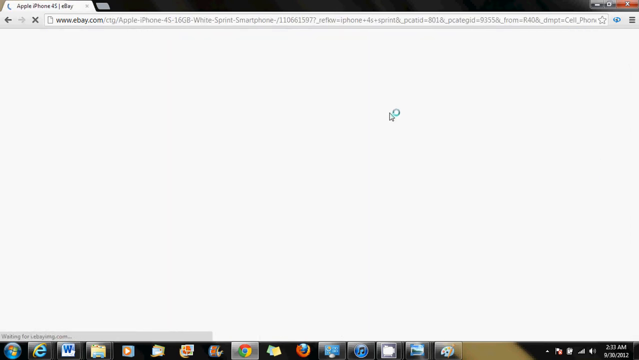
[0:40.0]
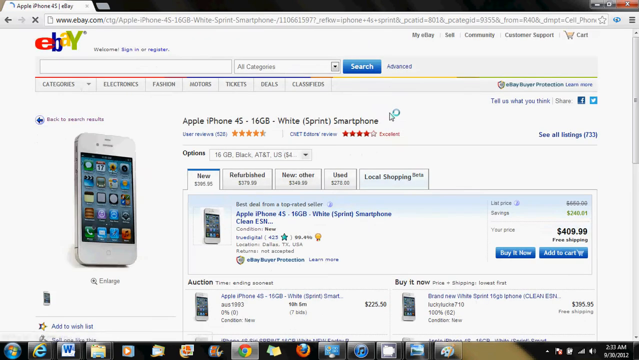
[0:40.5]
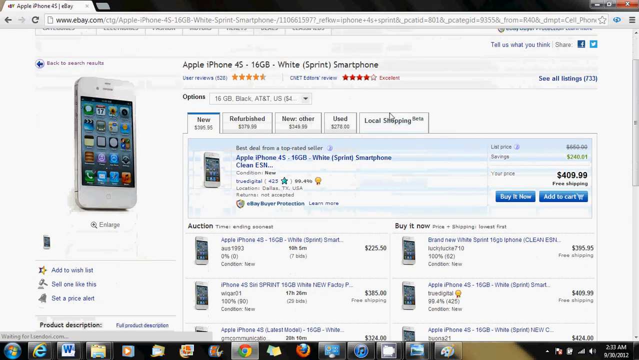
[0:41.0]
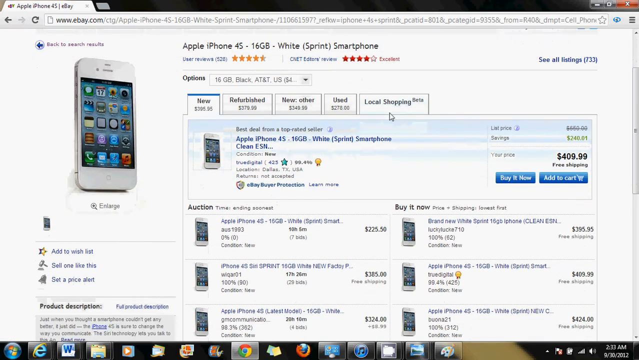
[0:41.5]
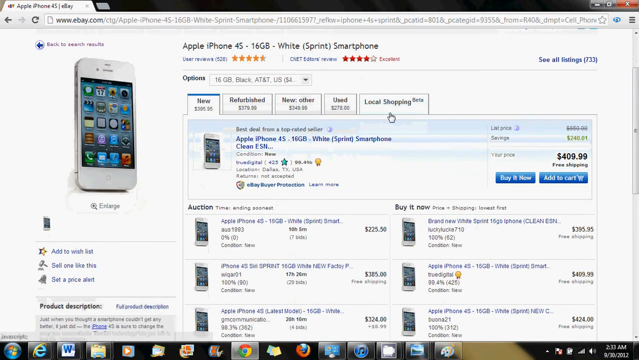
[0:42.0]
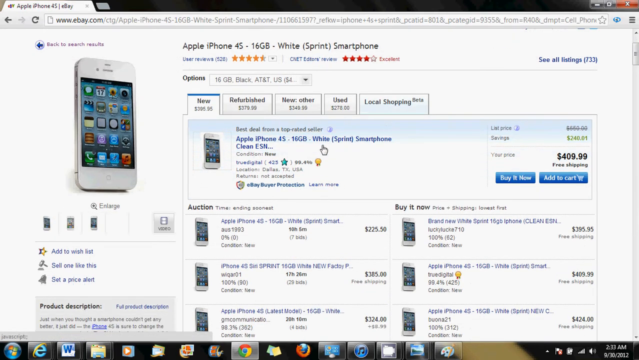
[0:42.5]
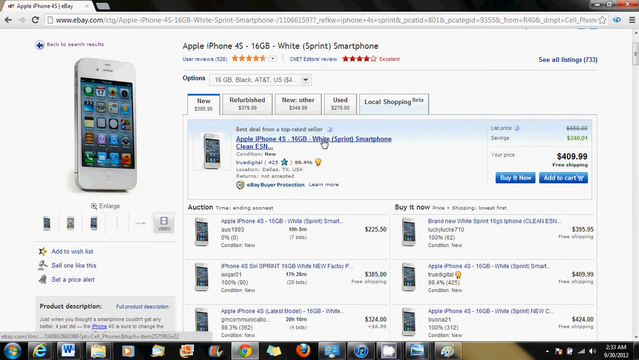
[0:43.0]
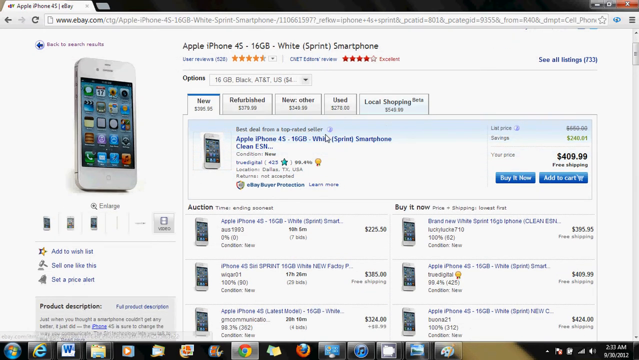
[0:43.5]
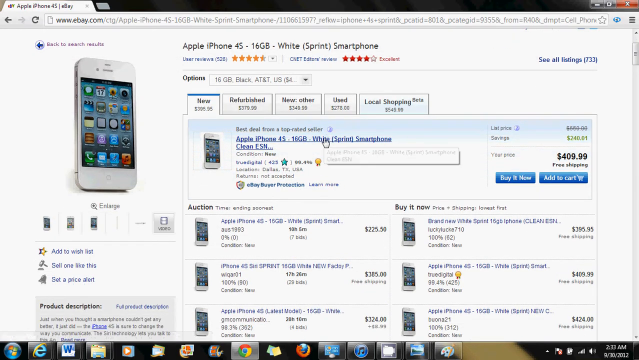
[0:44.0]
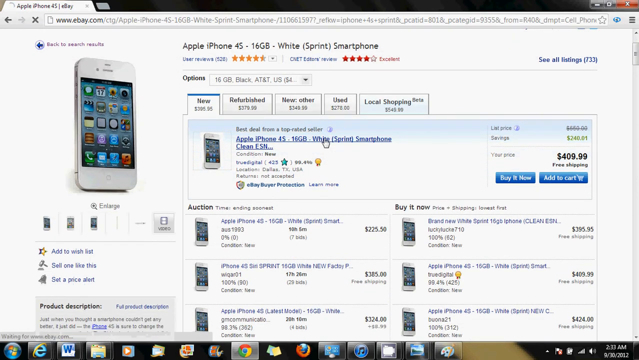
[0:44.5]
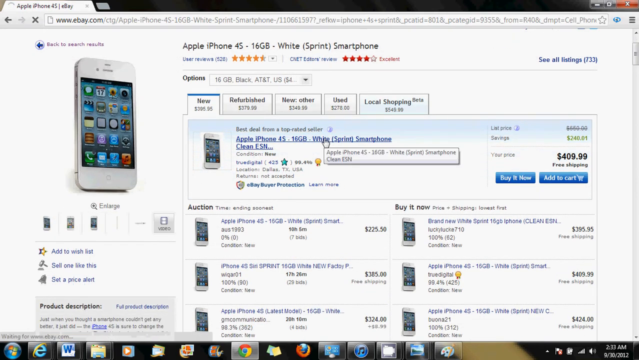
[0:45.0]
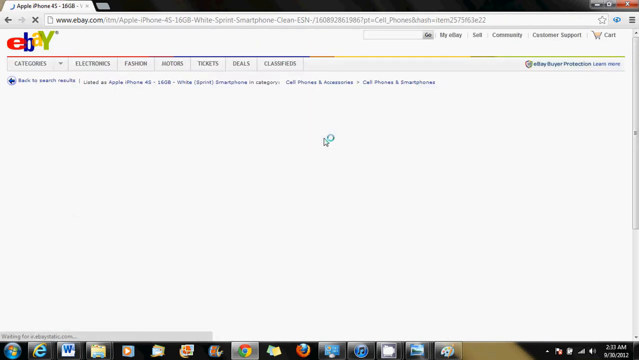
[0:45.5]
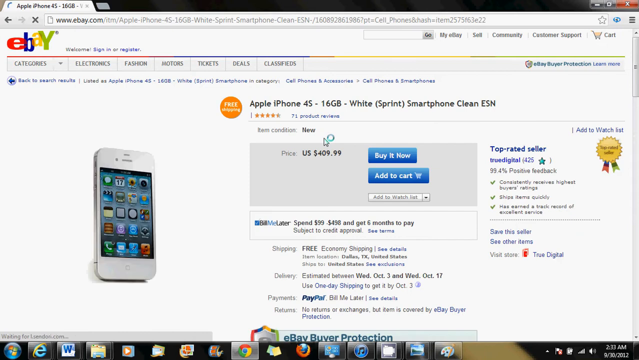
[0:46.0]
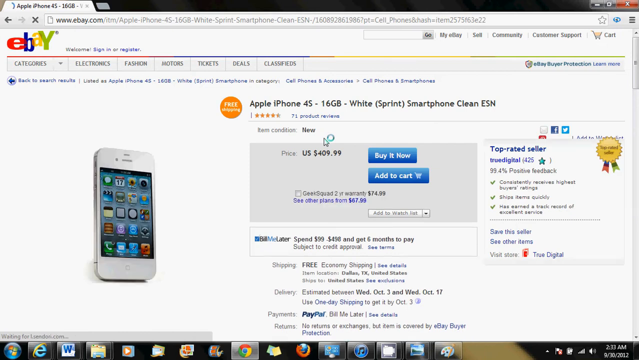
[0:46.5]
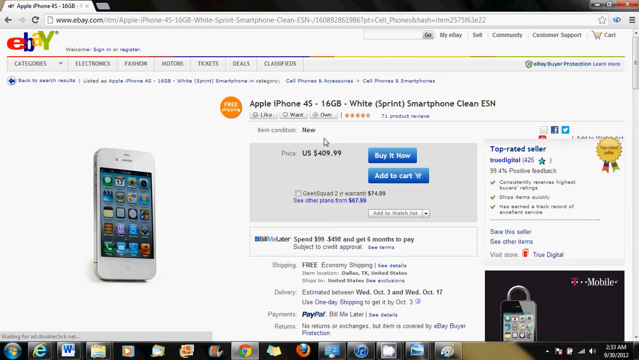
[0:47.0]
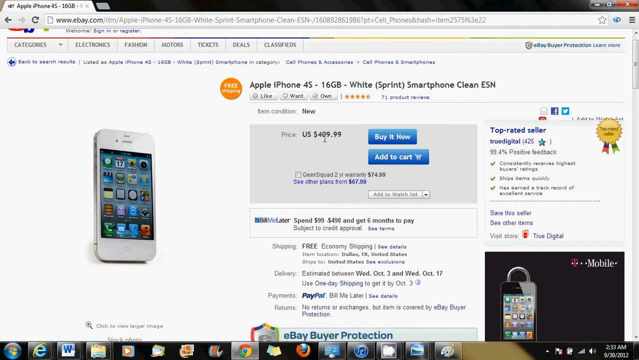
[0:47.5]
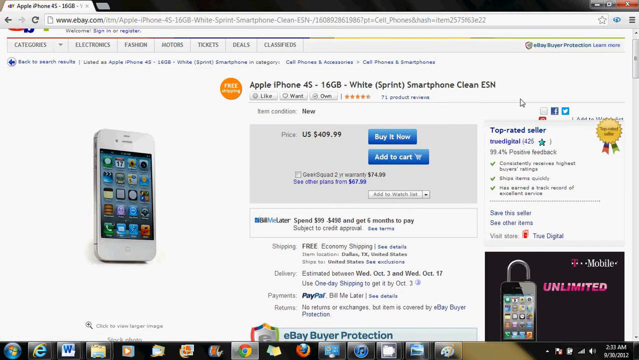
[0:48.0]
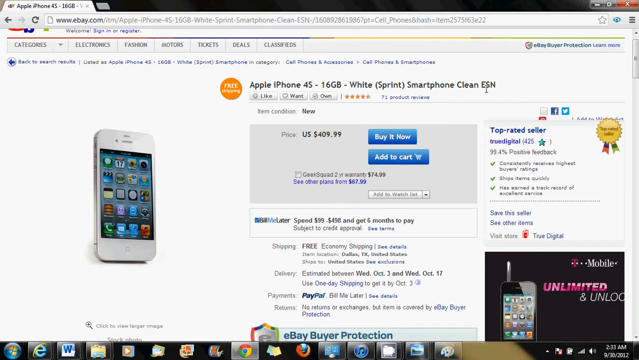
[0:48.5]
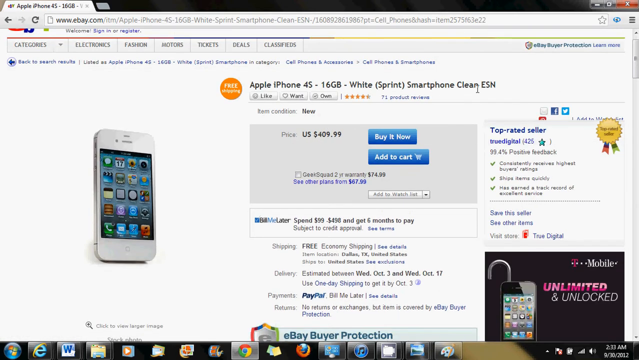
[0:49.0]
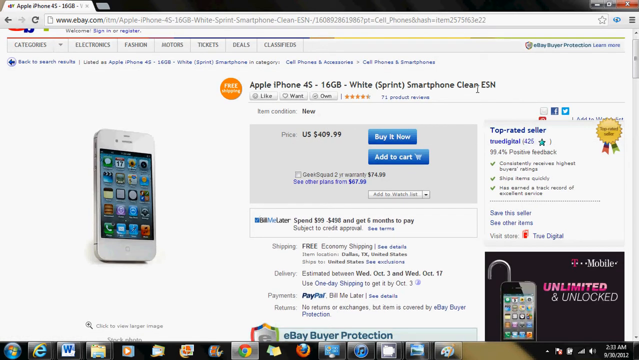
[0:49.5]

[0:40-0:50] The listing opens and shows the price, with tabs underneath for new, refurbished, new other, used, and local shopping. What appeared before was a set of redirect links; the person clicks the link for the new one and the actual listing appears. The page scrolls down a little, and on the left side is a large picture of an iPhone 5 or 4S.